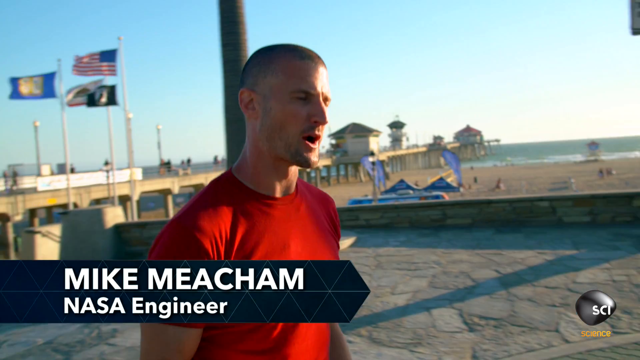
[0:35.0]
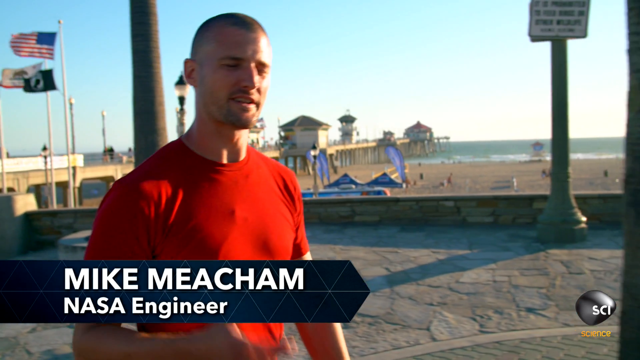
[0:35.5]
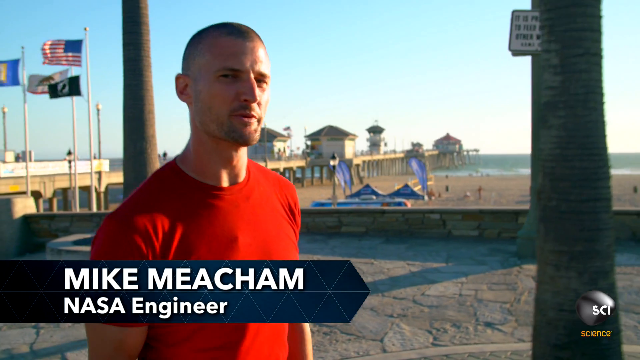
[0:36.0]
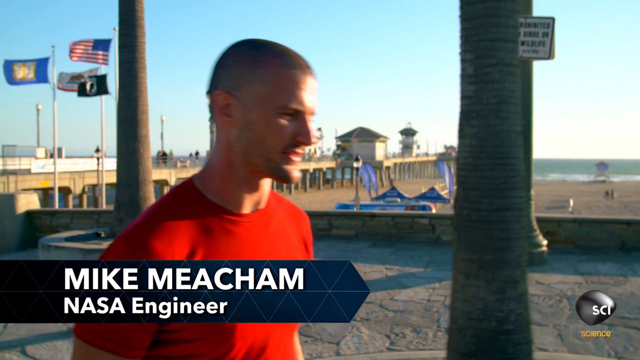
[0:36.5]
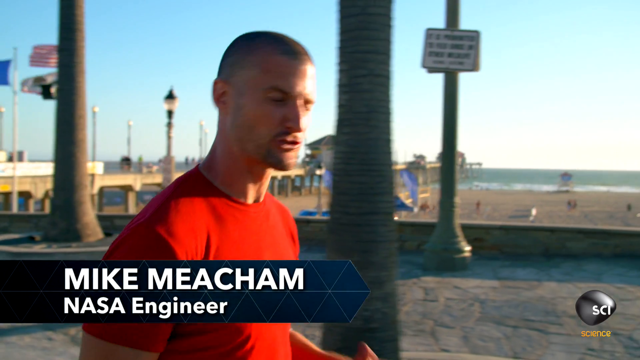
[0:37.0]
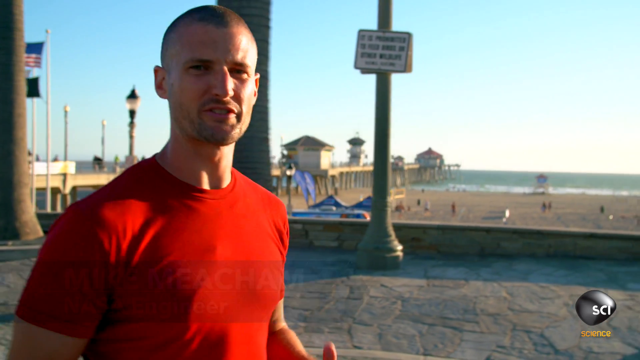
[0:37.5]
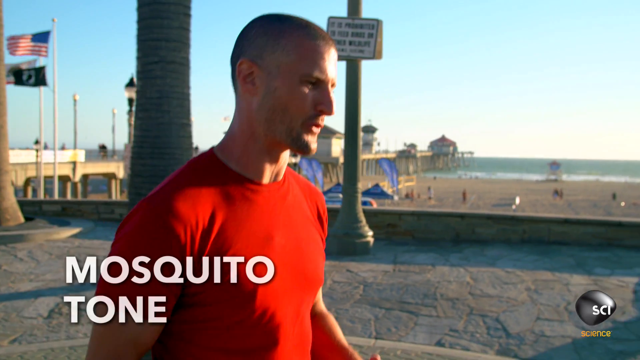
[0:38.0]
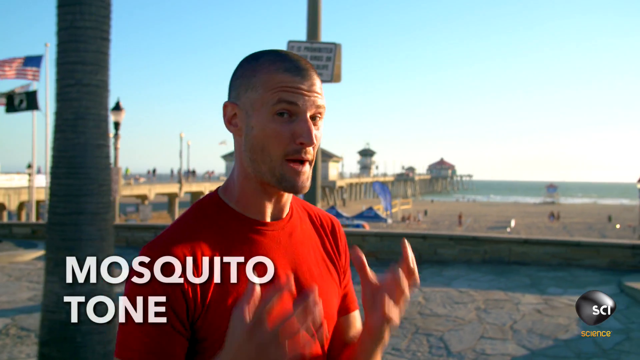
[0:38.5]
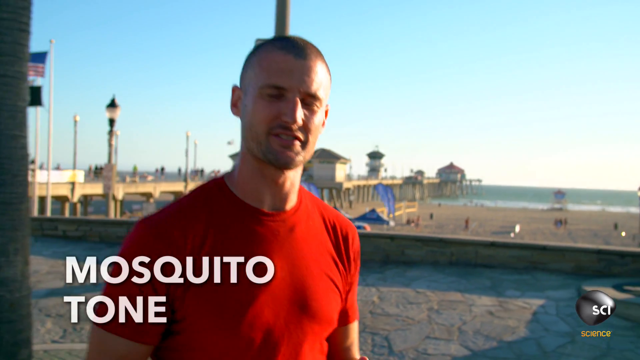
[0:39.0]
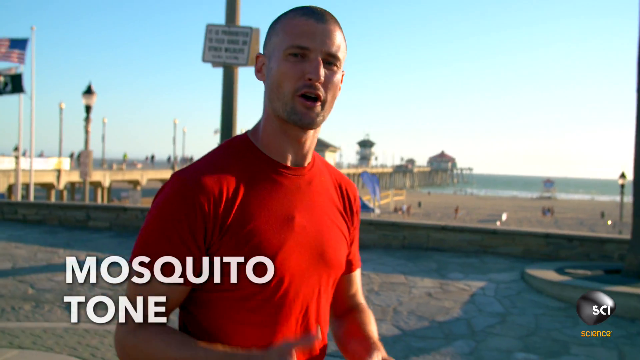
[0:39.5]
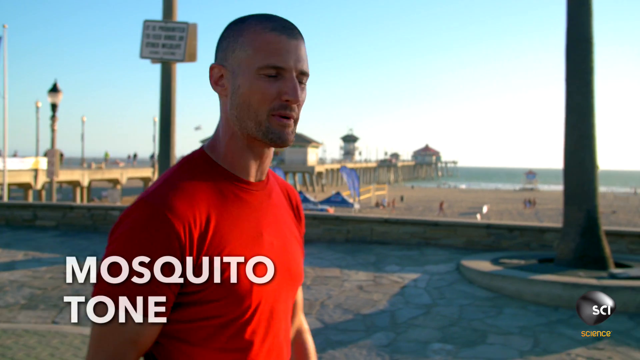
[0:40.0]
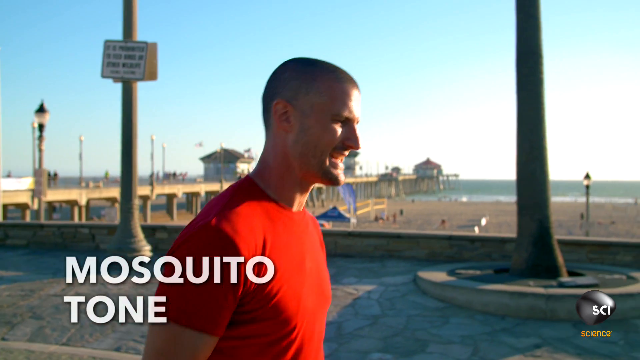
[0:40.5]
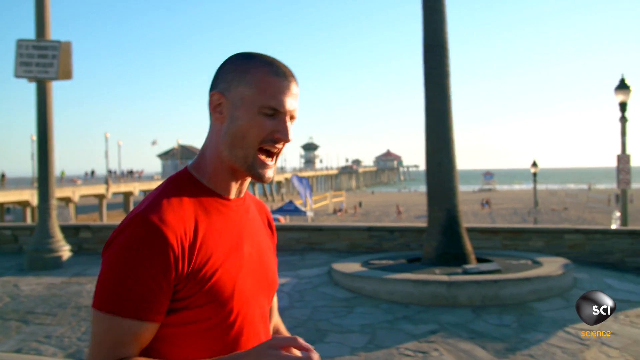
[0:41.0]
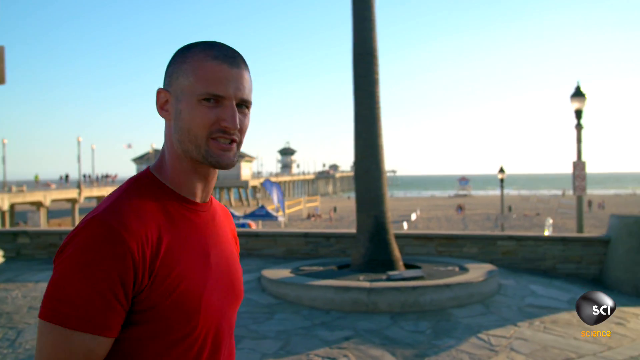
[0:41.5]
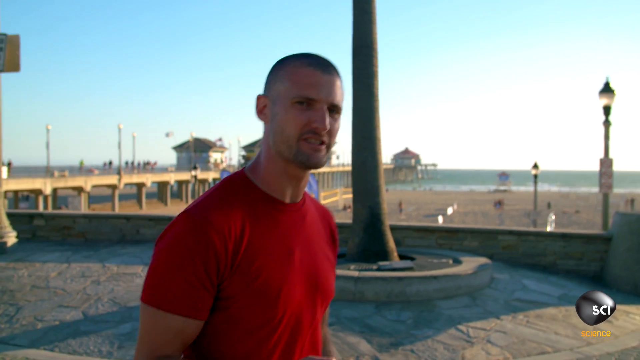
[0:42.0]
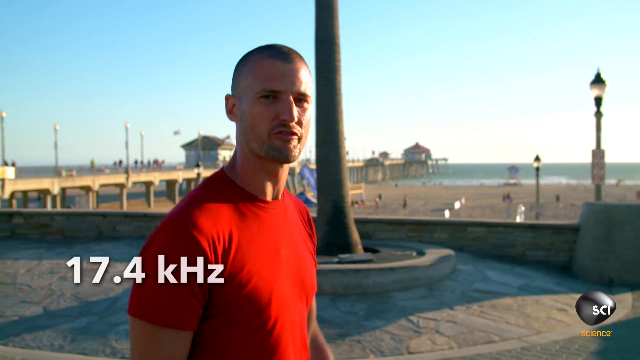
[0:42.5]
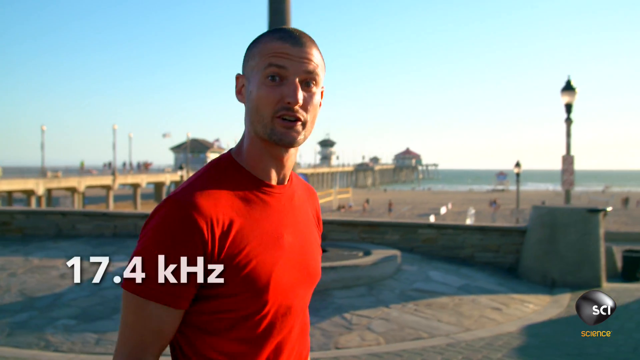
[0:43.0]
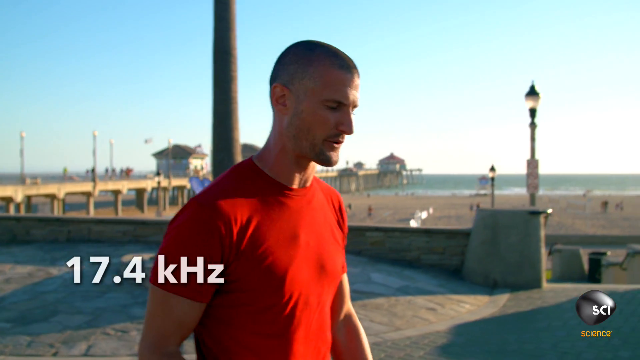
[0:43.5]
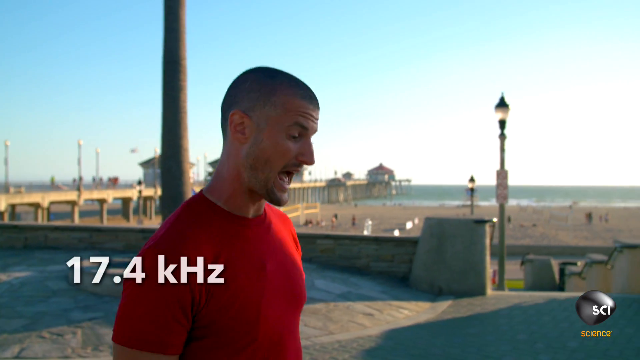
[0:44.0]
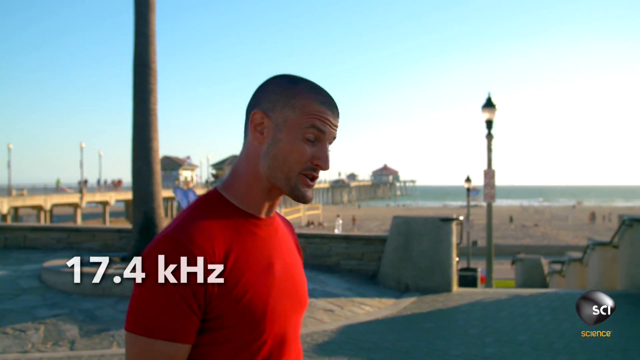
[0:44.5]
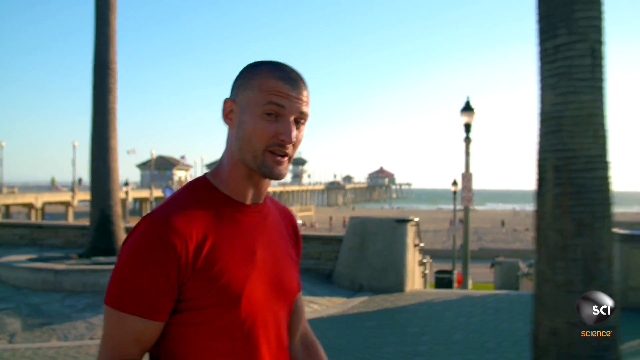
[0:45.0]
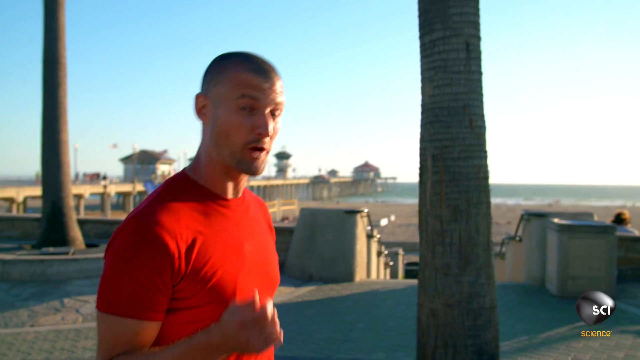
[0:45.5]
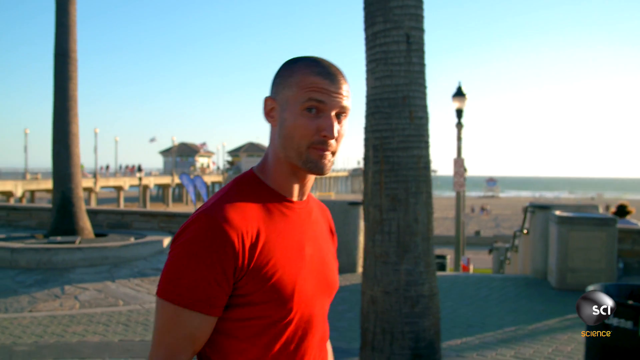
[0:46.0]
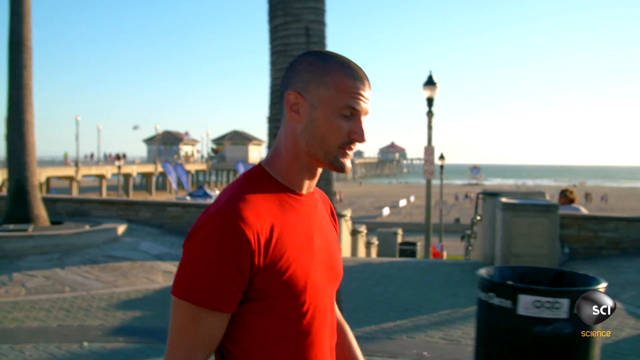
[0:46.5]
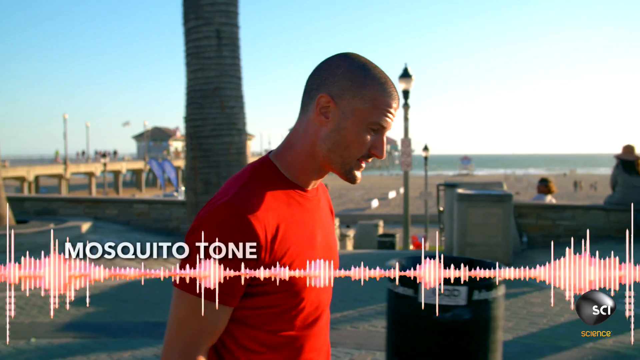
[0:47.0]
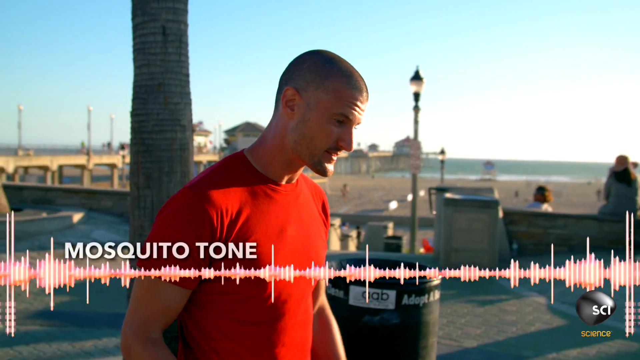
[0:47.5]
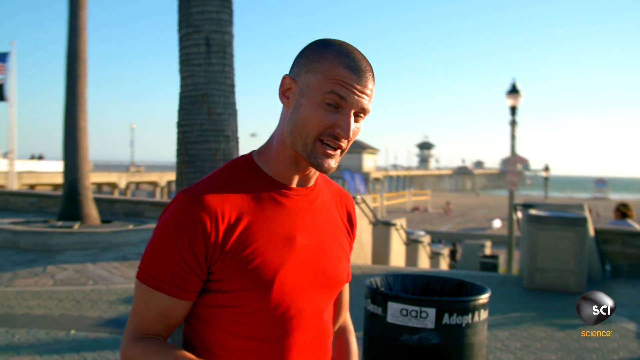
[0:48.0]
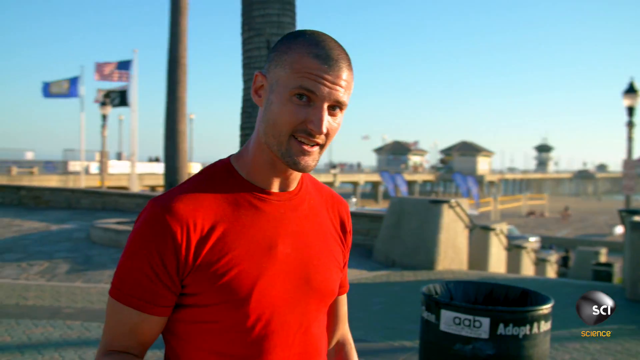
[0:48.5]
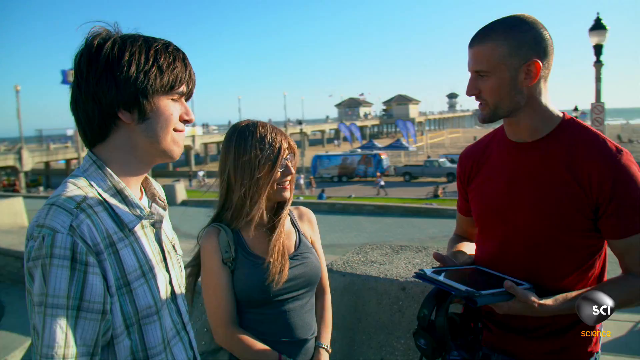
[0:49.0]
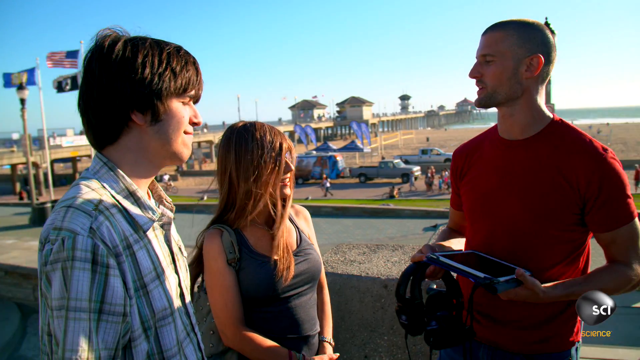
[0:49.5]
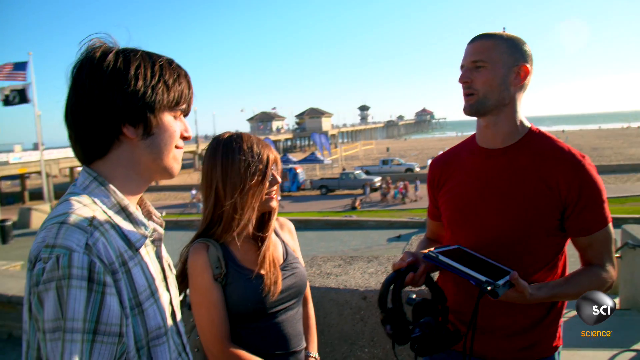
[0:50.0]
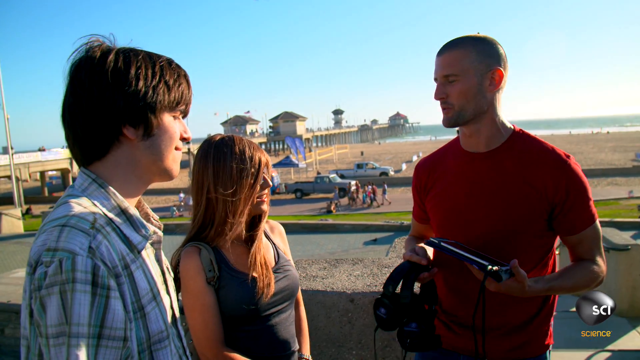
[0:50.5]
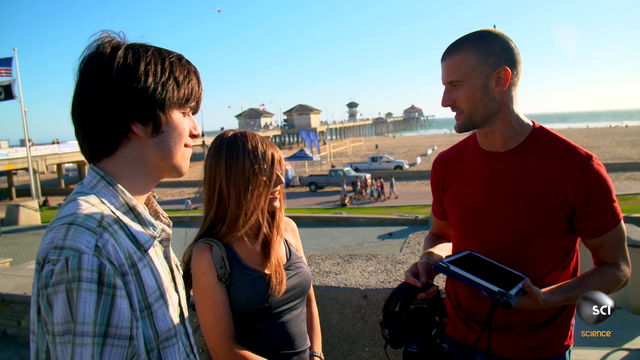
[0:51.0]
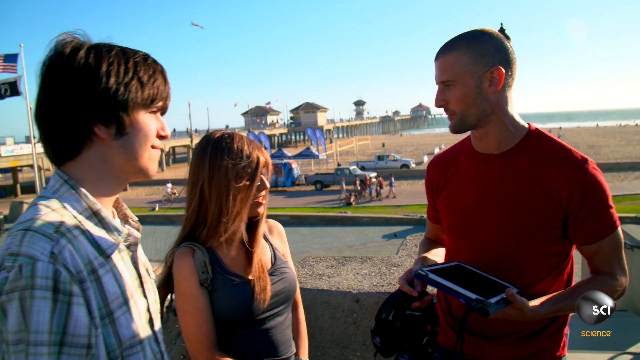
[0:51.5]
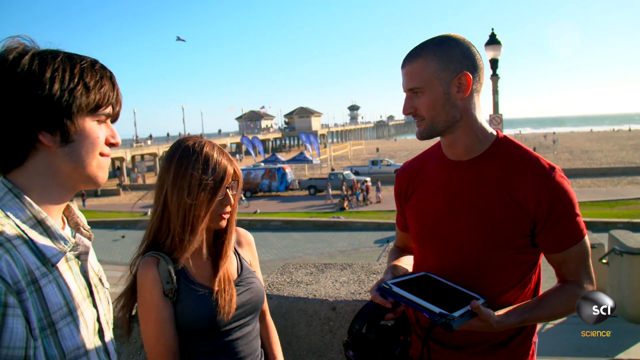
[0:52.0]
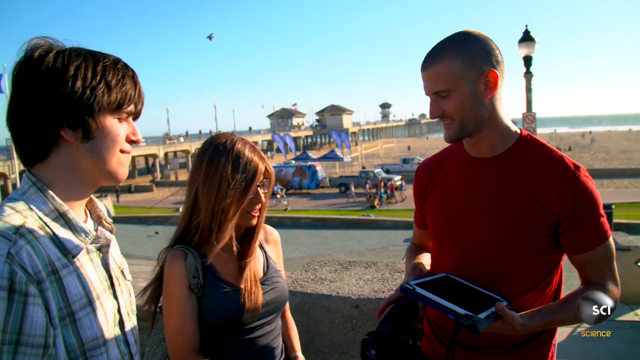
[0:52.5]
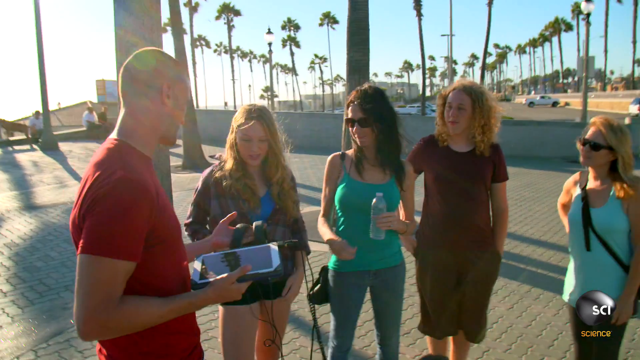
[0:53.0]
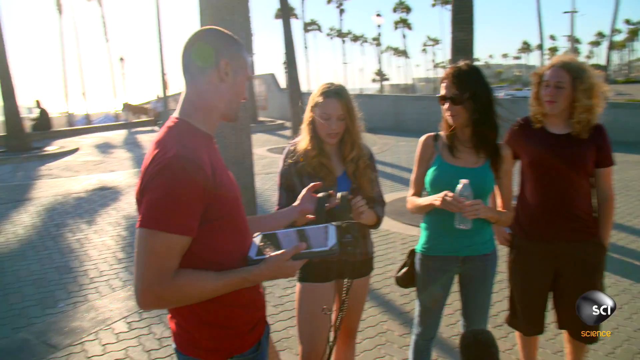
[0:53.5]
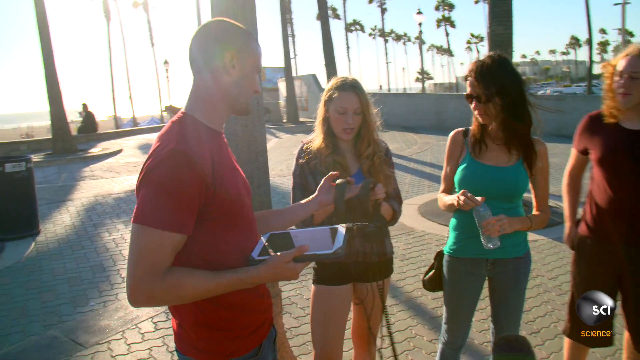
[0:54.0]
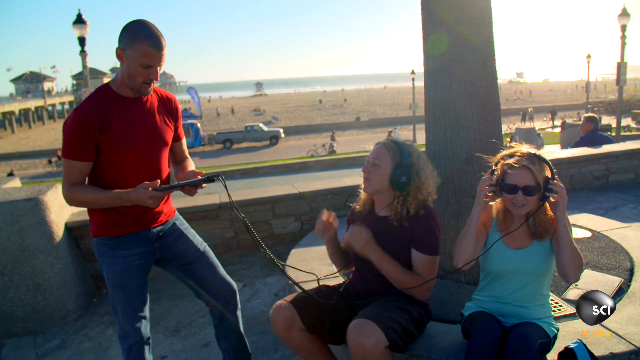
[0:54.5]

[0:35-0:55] A man named Mike, in a tight red t-shirt, walks along a boardwalk with the ocean behind him. Text reads "Mike Mecham, NASA engineer" and "Mosquito Tone," along with "17.4KHZ," and a sound bar appears underneath the words "Mosquito Tone." He has short hair, looks quite young, very physically fit and casual. Holding an iPad and some headphones, he interviews two young people, then four different people, then two people, giving them the headphones to listen to, apparently as some kind of experiment or to show them what the mosquito tone sounds like. The people are dressed casually in t-shirts and jeans. The camera follows him as he walks, keeping the same angle, and is a little shaky.